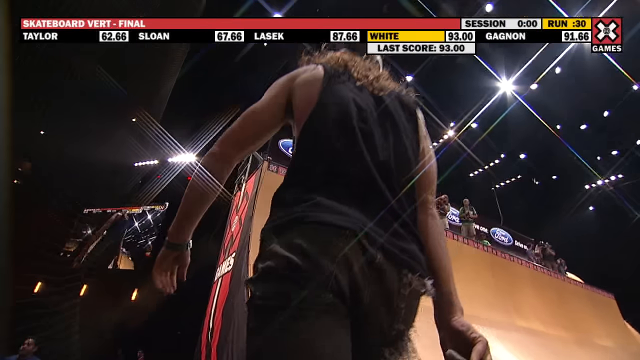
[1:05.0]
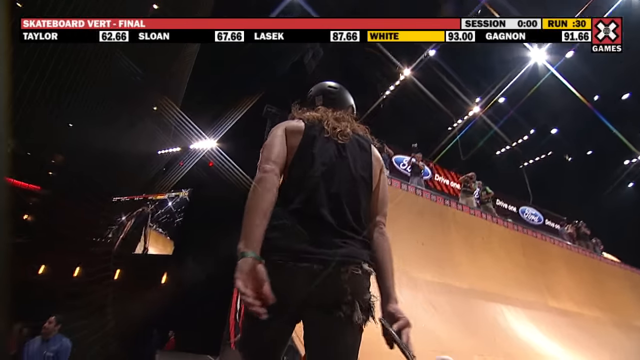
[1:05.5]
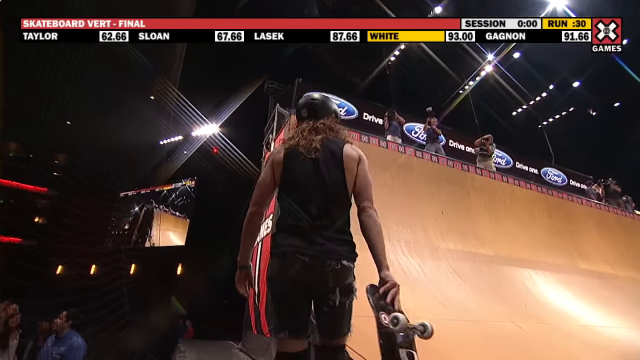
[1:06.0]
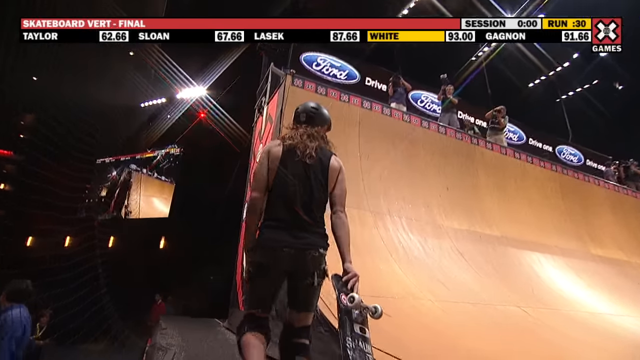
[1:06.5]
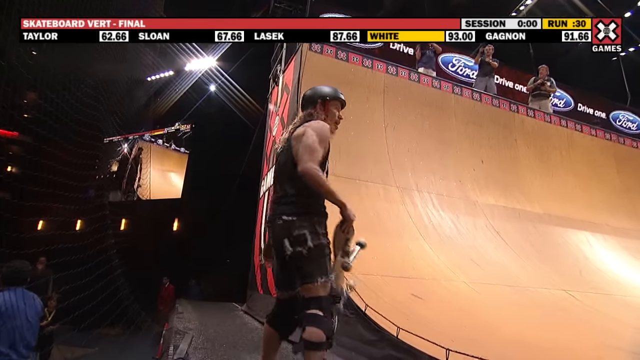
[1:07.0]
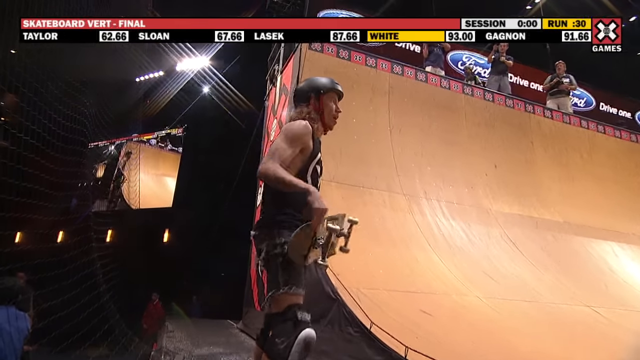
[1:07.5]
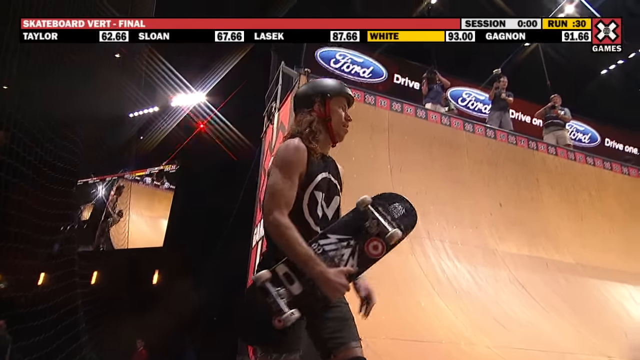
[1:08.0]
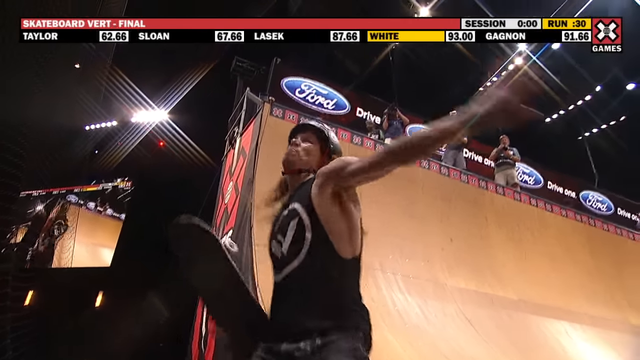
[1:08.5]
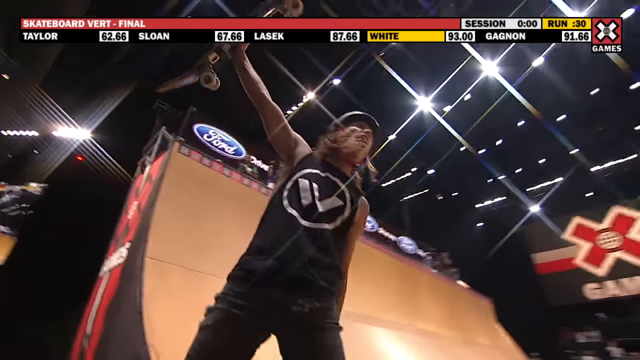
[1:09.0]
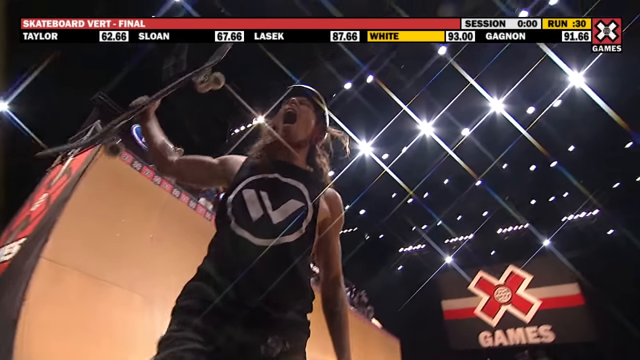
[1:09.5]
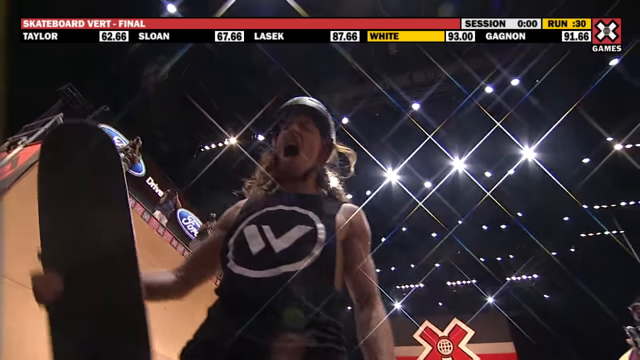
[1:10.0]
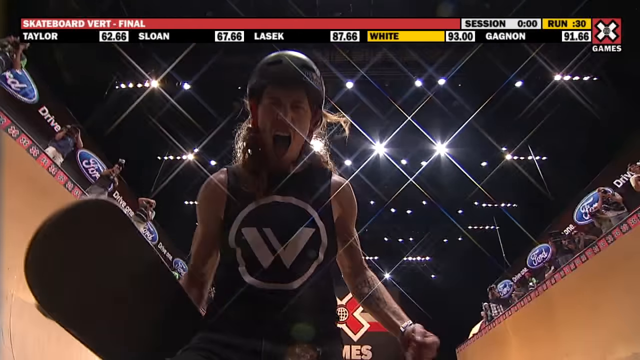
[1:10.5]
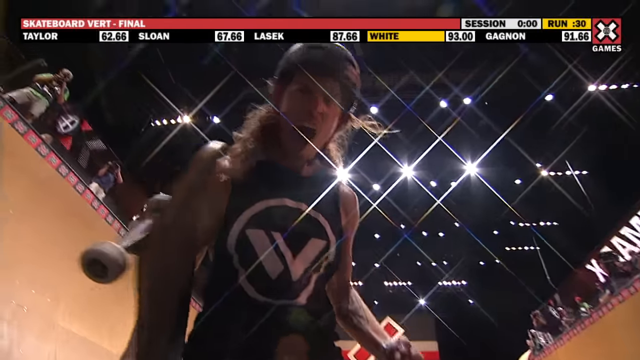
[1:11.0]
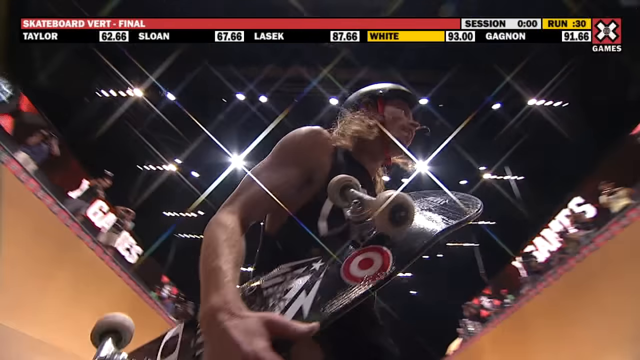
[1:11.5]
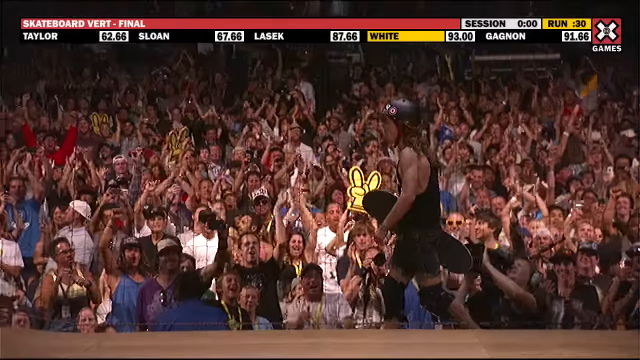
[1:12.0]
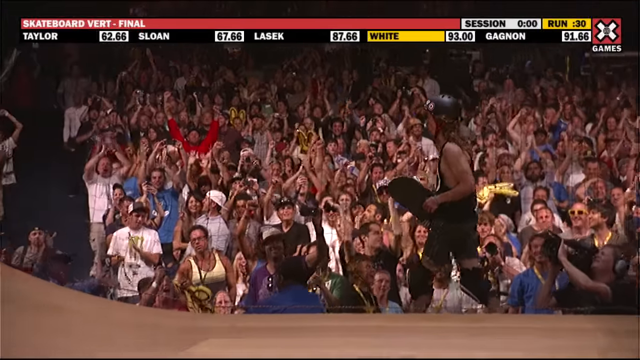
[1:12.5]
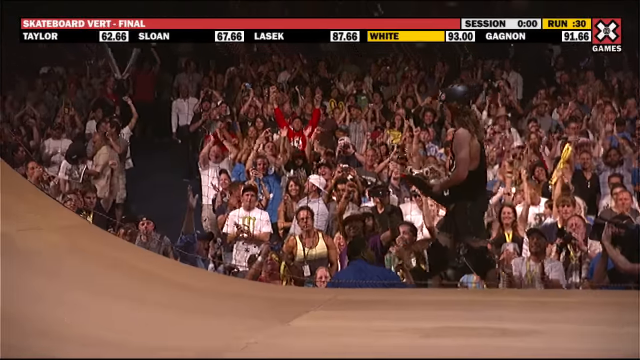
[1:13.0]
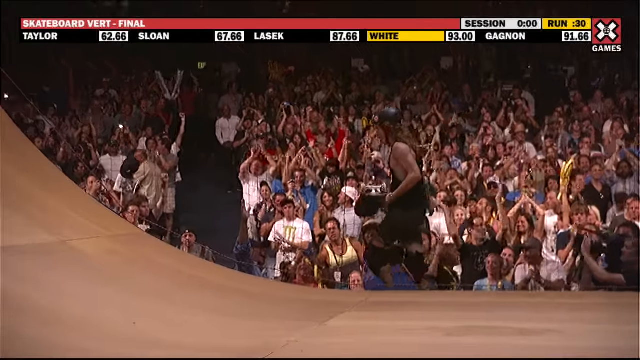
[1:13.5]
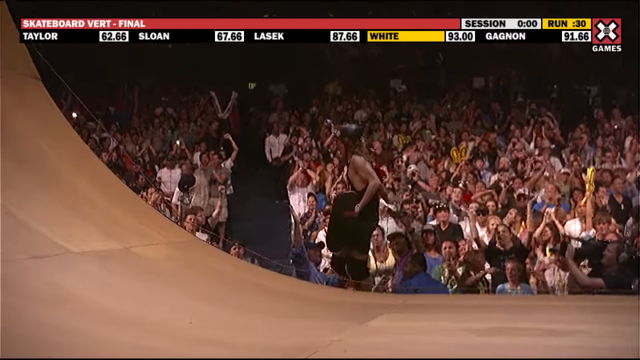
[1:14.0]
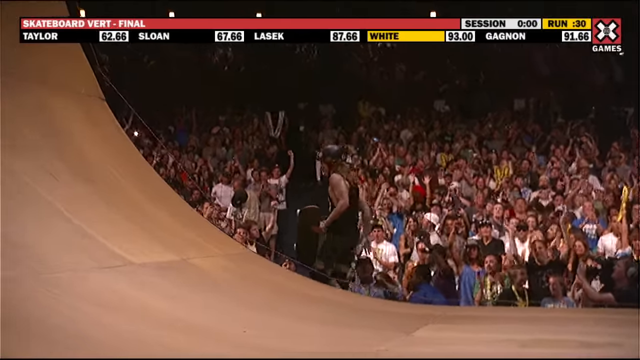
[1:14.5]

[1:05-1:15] The skateboarder in the black tank top walks by the side of the ramp and thrusts his board into the air with one arm, very violently, celebrating. He opens his mouth wide and appears to shout while making eye contact with the camera below him. He then walks along the side of the ramp past people in the crowd who are clapping and raising their arms in the air, celebrating with him. His hair, which is past his shoulders, is flying all over the place and looks tousled. His competitor in a baseball tee at the top of the ramp, who is wearing knee pads, grabs the ramp railing and appears to be getting ready for his turn.